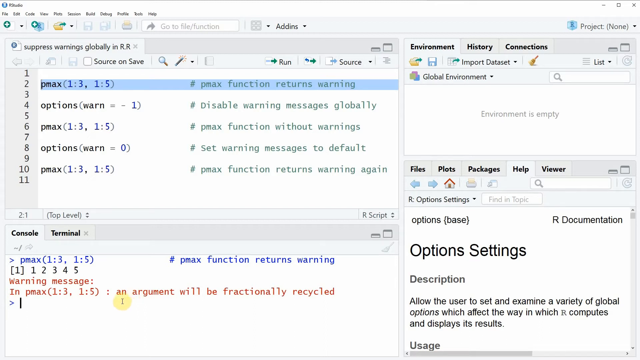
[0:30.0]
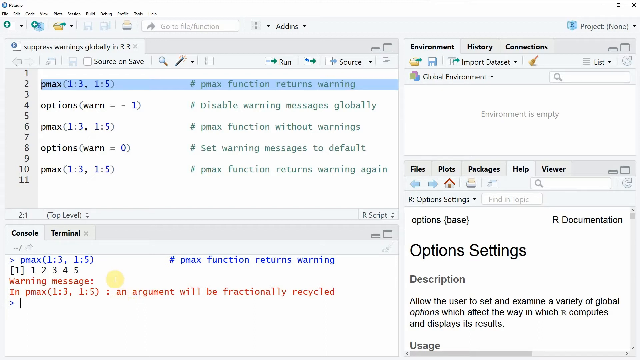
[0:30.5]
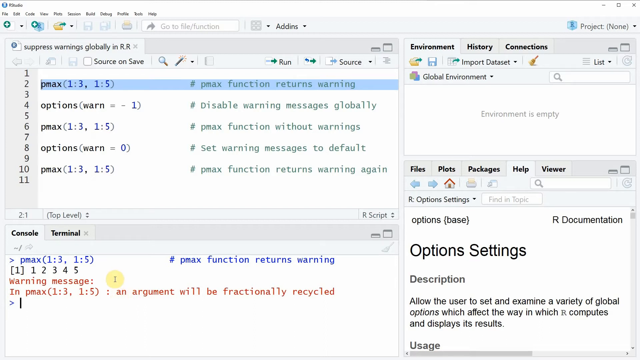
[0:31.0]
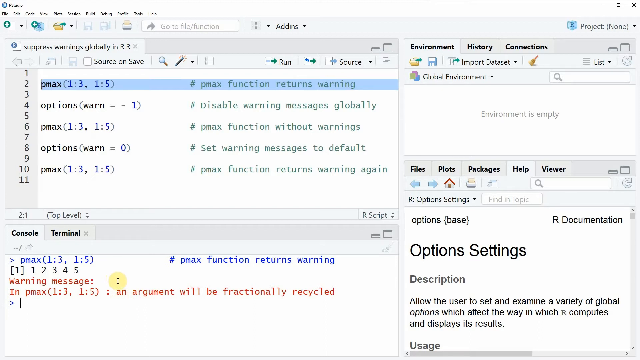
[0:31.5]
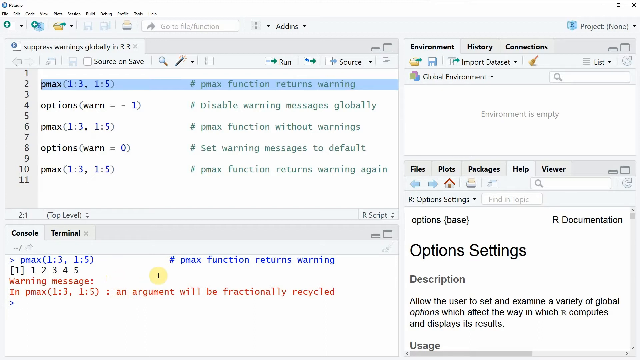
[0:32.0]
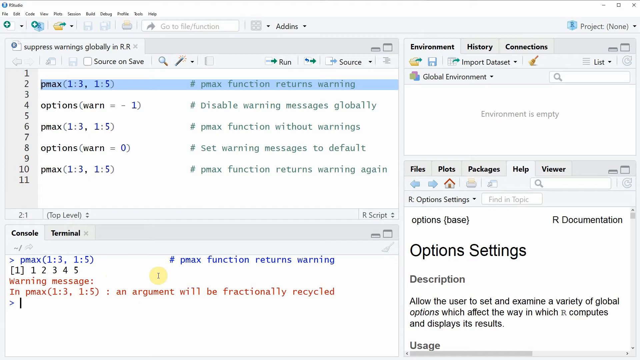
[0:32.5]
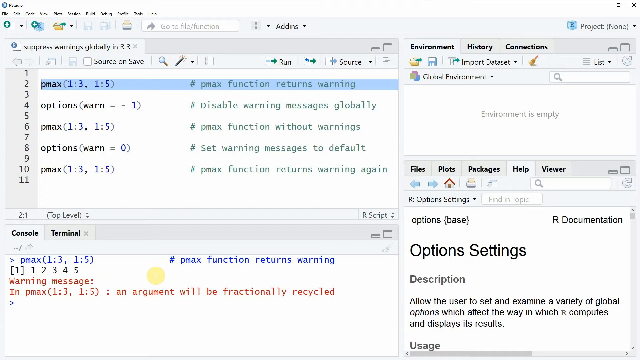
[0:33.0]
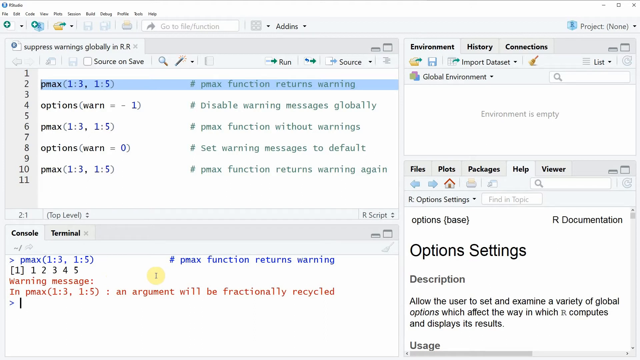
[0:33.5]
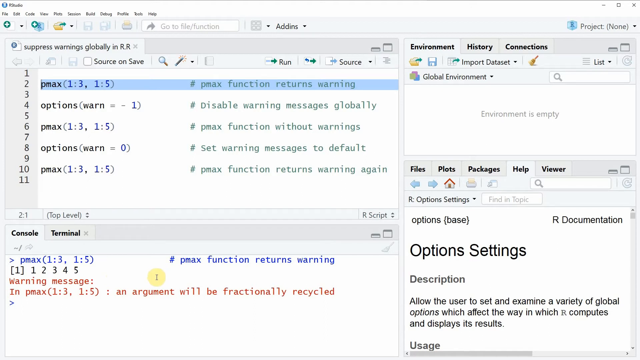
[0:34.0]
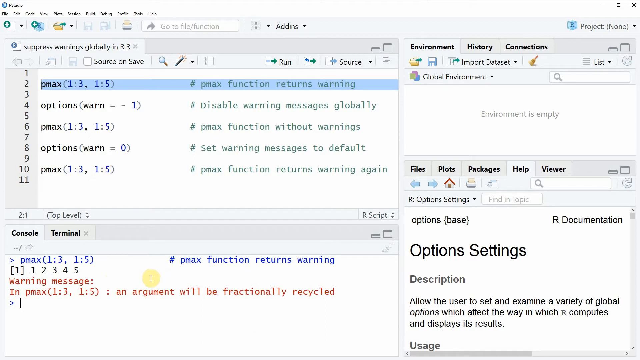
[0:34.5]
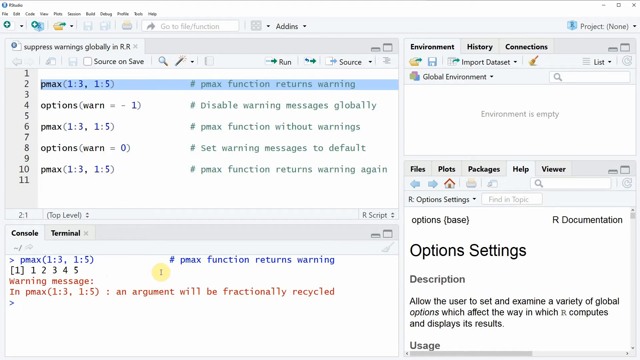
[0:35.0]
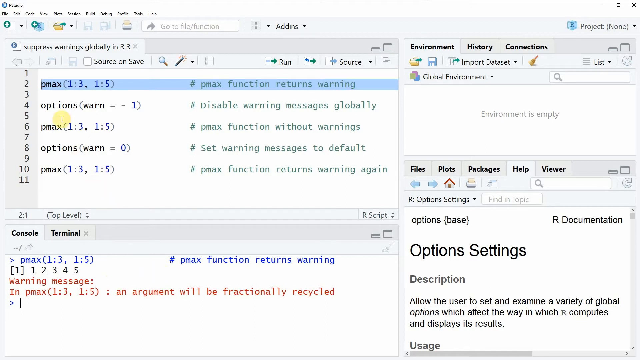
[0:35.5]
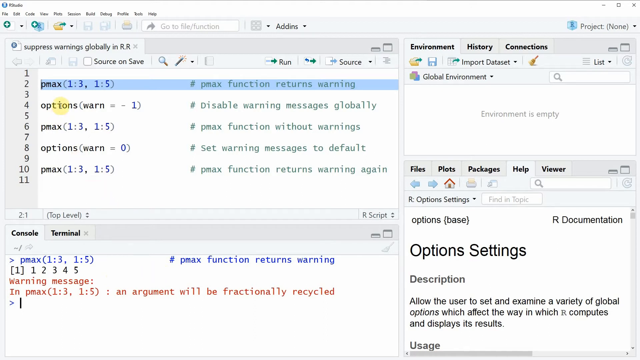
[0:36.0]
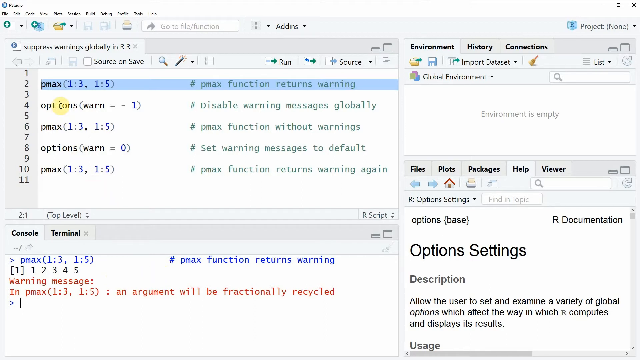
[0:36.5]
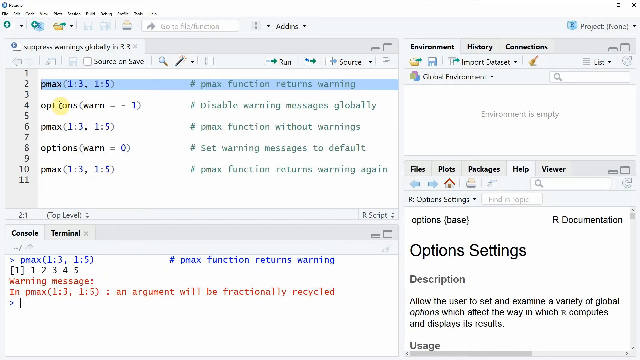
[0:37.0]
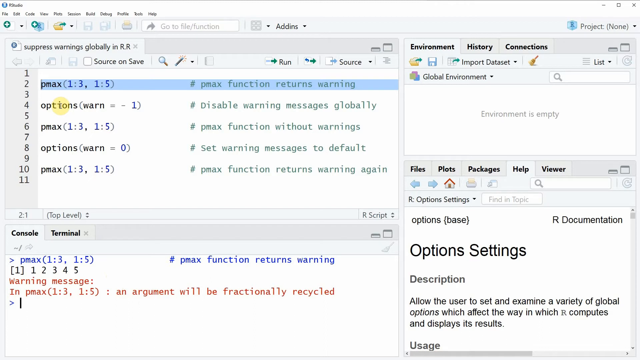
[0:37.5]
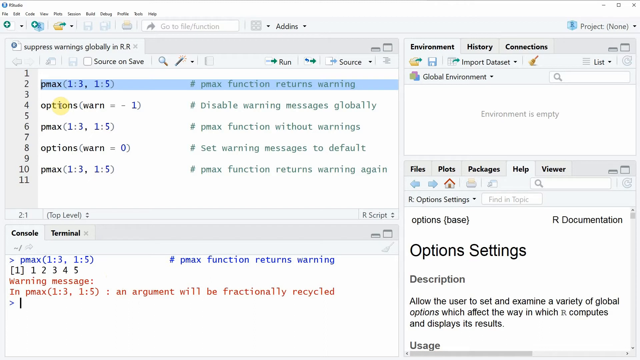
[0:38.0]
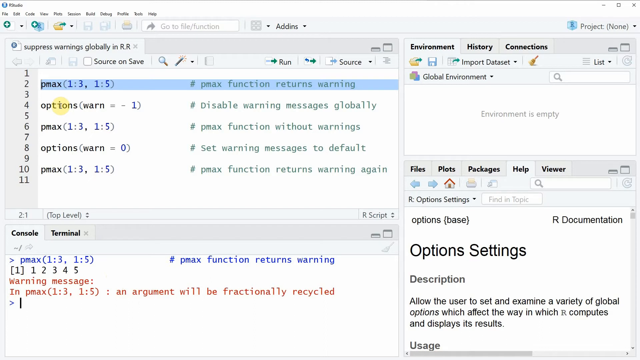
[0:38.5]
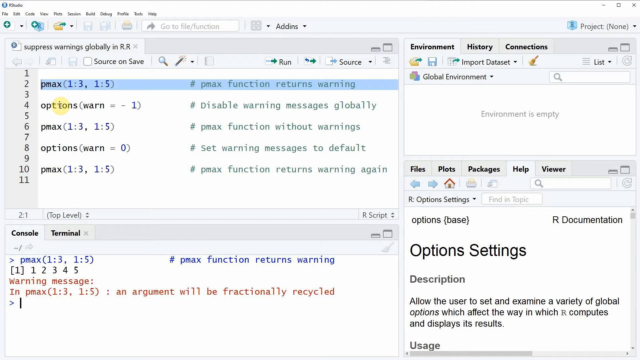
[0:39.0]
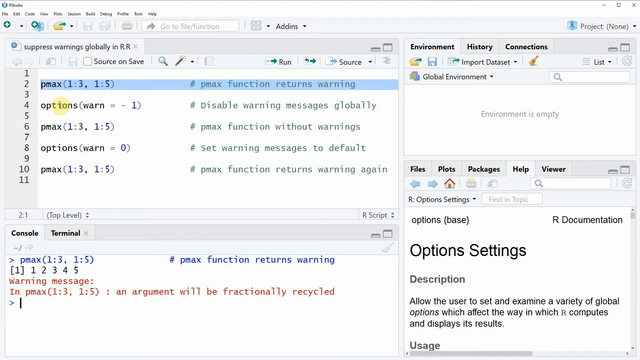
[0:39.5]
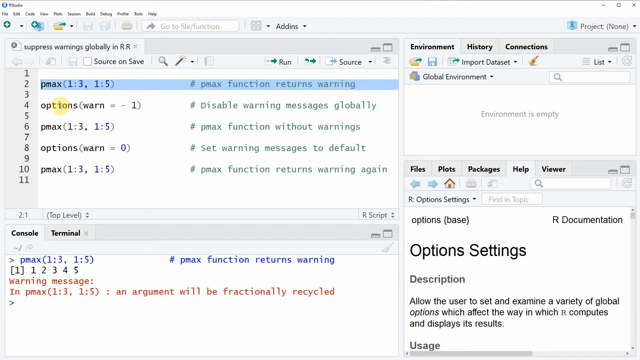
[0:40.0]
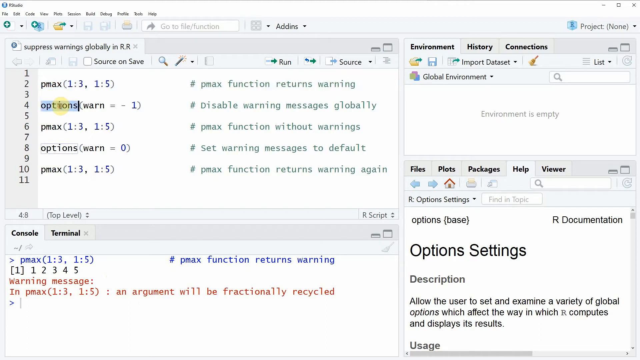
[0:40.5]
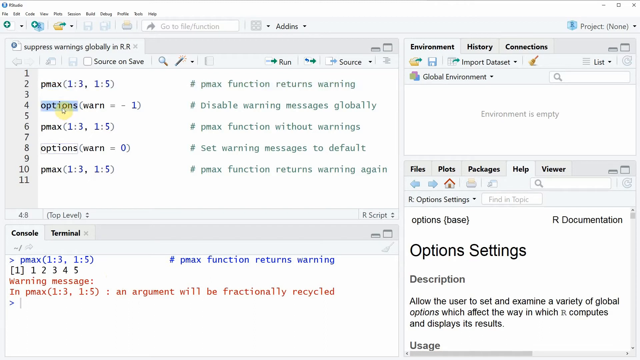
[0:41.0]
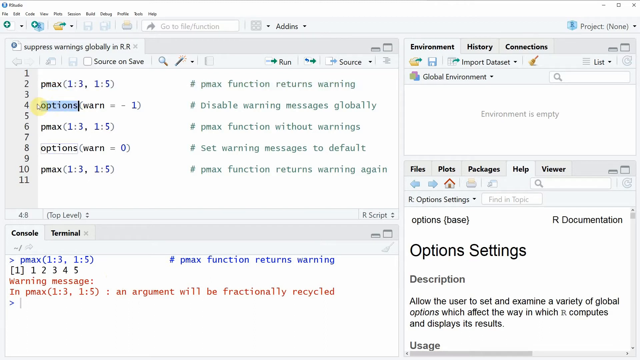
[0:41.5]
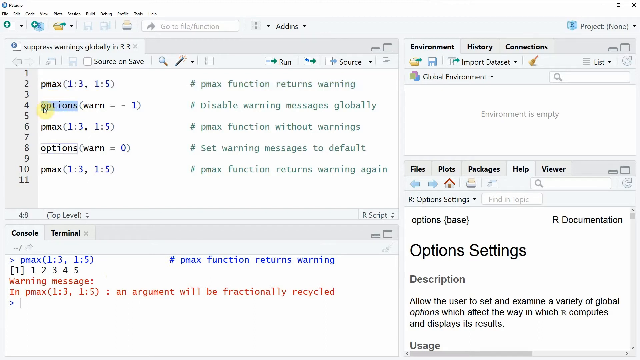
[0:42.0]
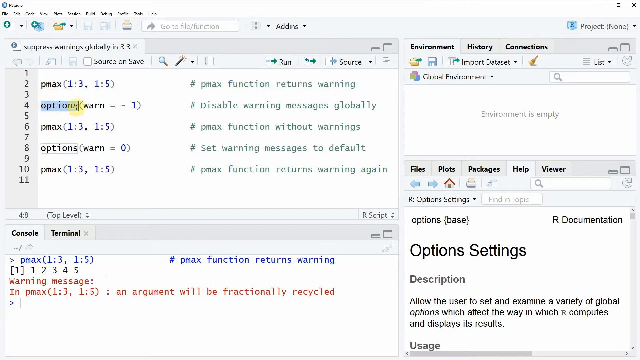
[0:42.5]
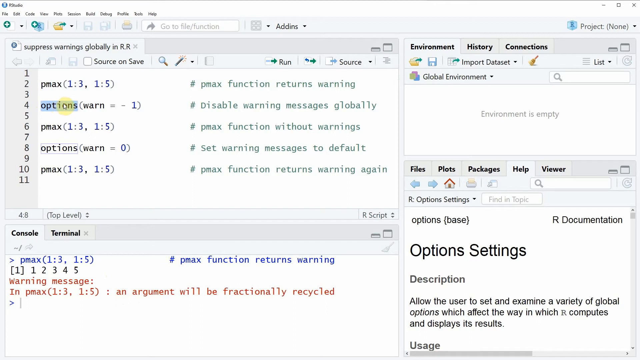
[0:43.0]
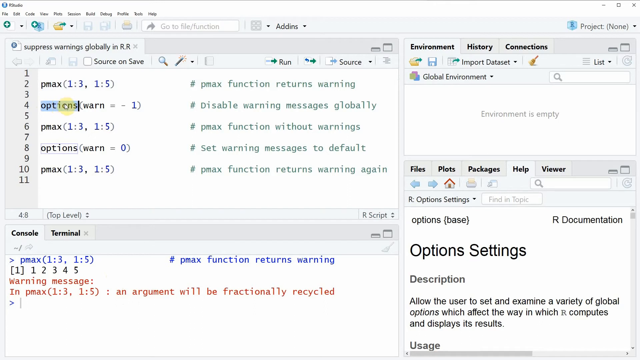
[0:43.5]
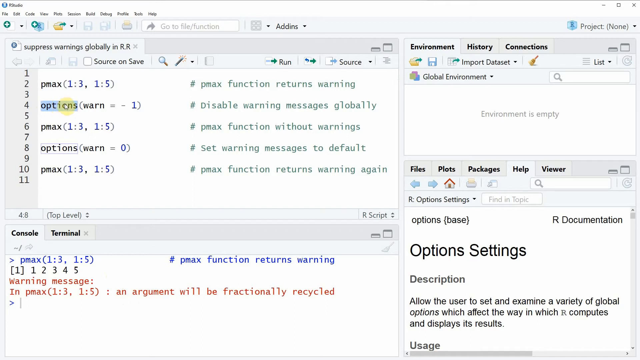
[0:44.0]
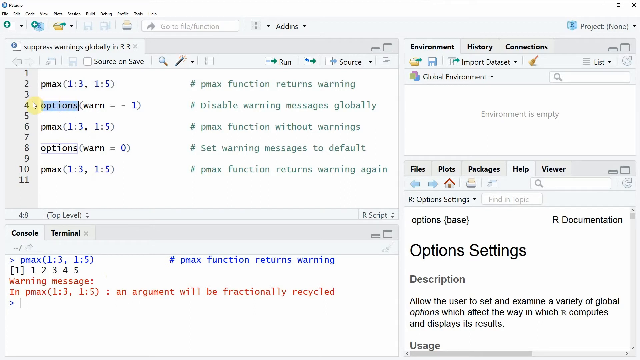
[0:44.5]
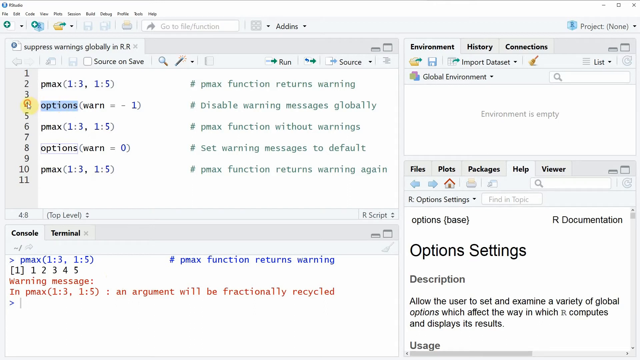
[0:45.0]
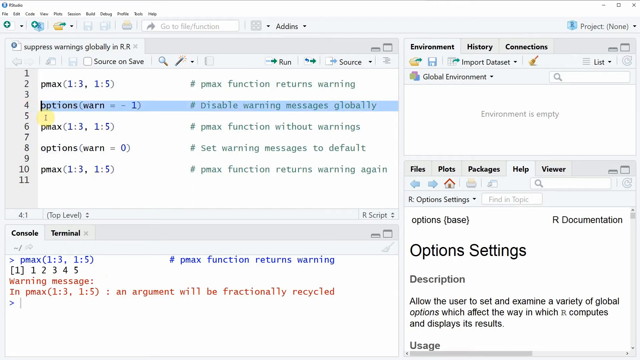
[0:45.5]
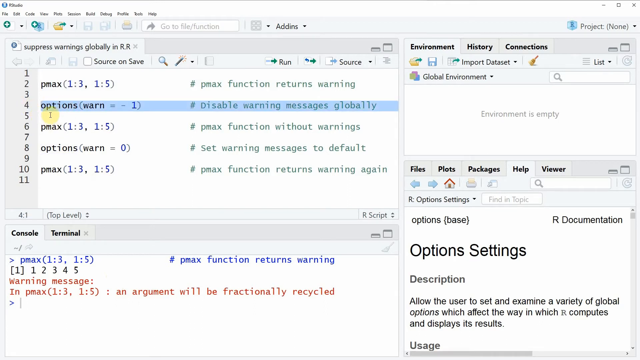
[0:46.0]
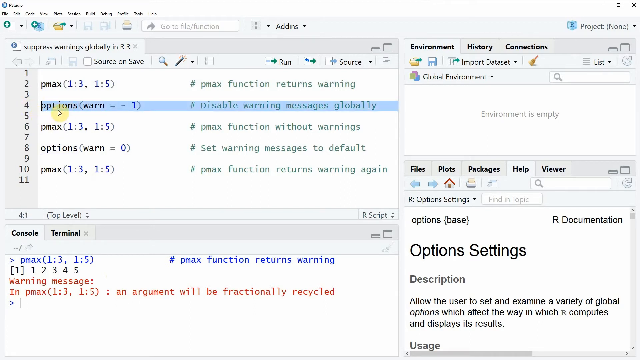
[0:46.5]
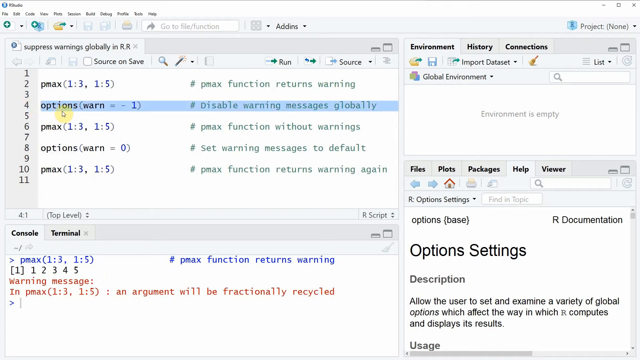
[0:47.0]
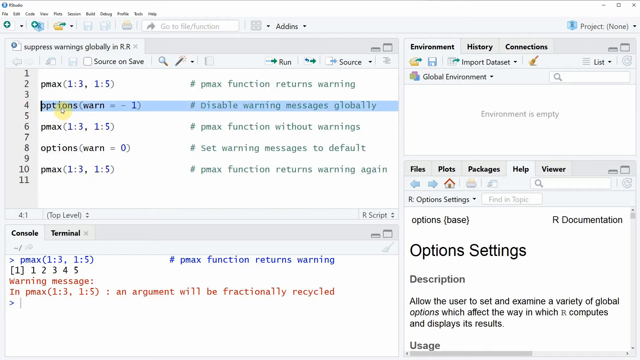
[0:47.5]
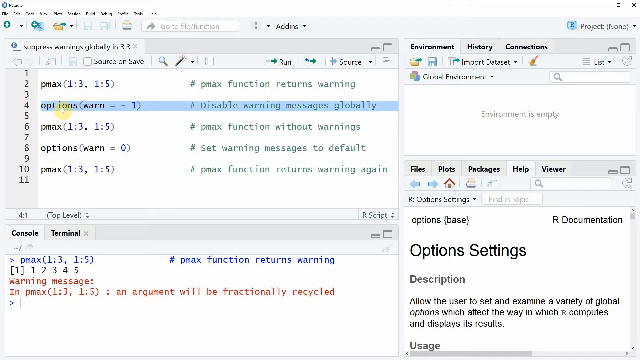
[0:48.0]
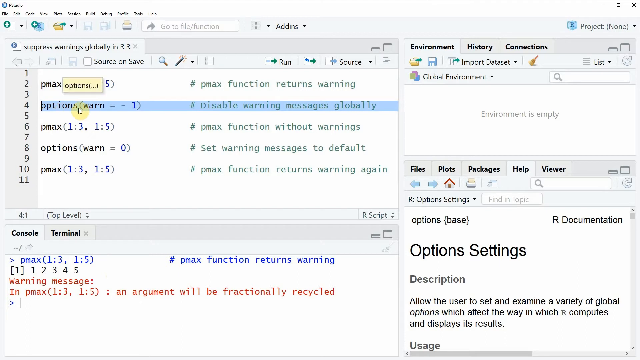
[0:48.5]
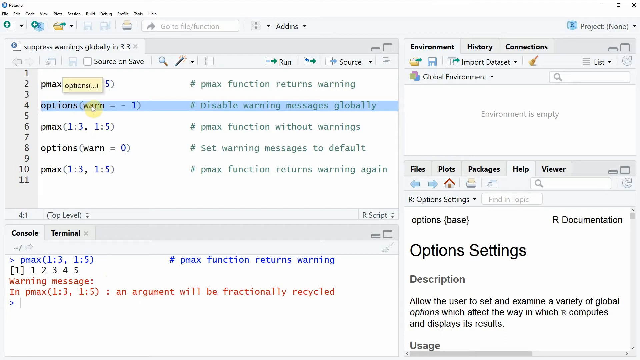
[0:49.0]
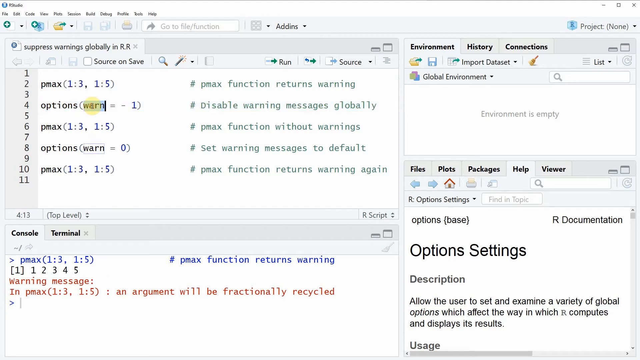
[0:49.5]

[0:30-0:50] The same unidentified coding platform continues. An options input is inserted with warn equal to negative 1, and the comment in the code reads "Disable warning messages globally". The person selects this options input. A panel on the platform shows the global environment and an options setting, with a description saying it allows the user to set and examine a variety of global options which affect the warnings the code computes.